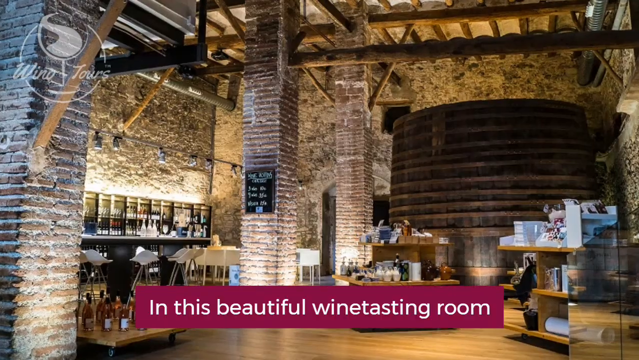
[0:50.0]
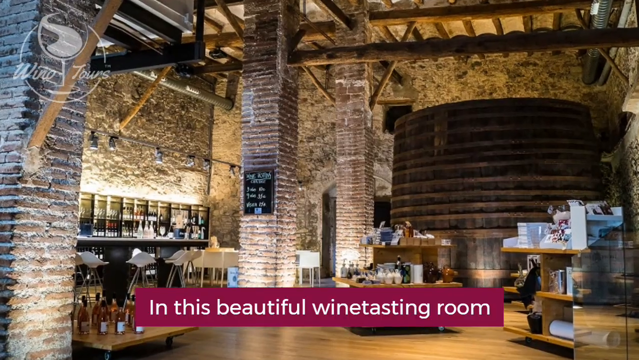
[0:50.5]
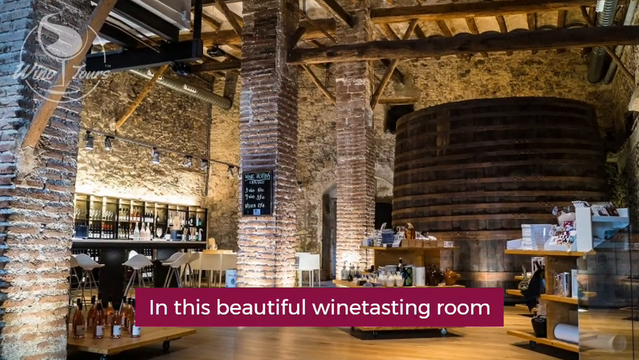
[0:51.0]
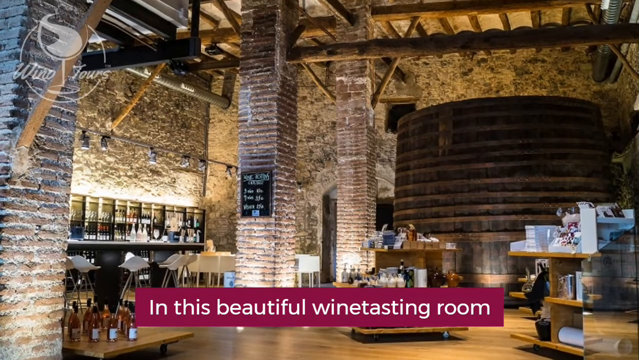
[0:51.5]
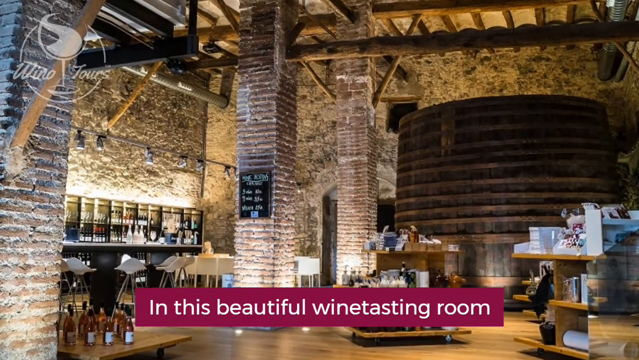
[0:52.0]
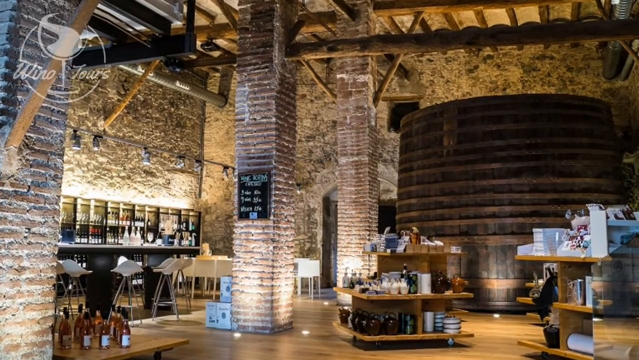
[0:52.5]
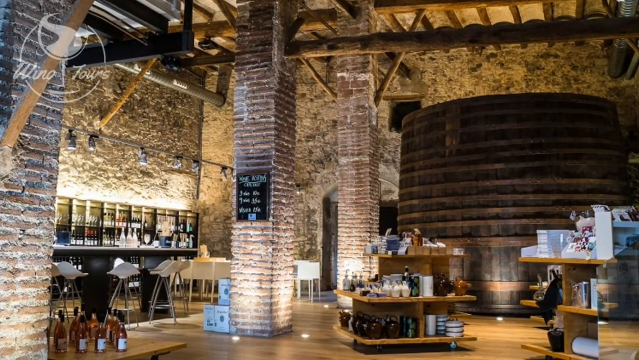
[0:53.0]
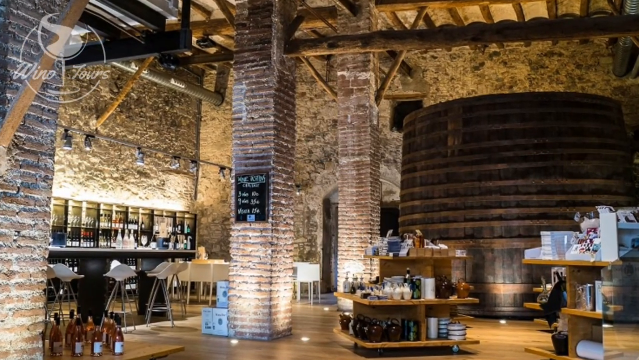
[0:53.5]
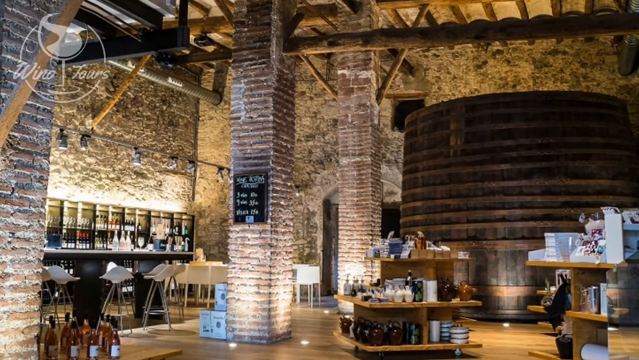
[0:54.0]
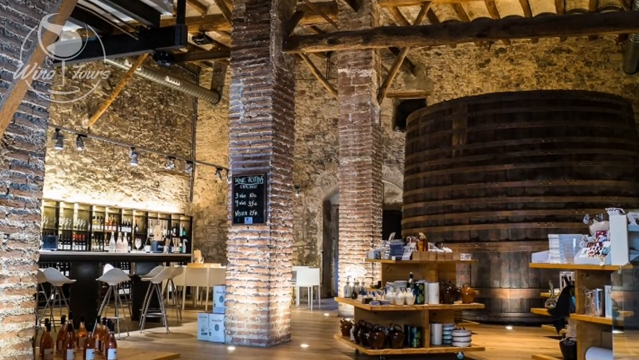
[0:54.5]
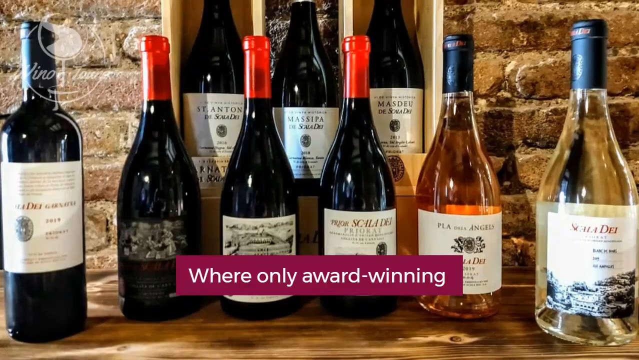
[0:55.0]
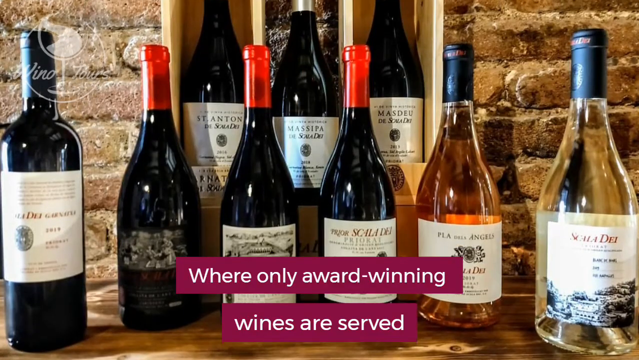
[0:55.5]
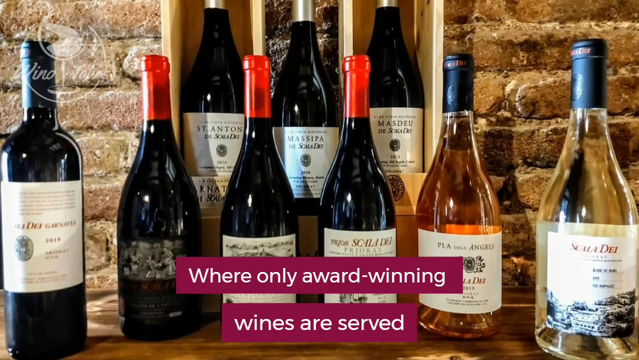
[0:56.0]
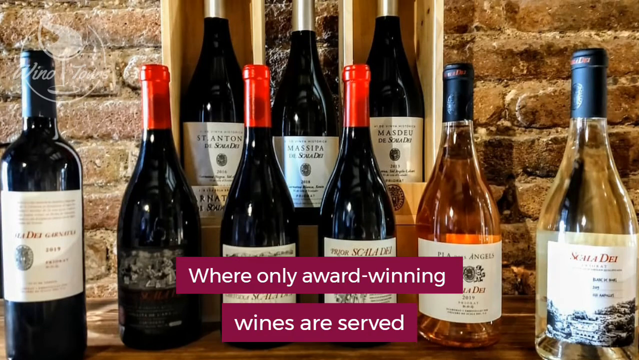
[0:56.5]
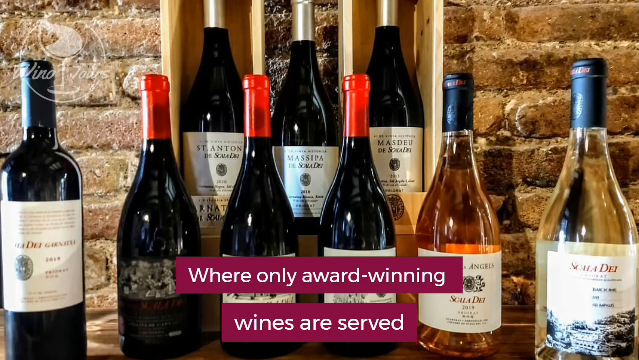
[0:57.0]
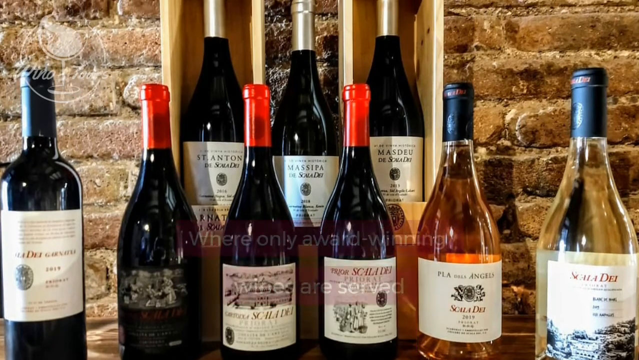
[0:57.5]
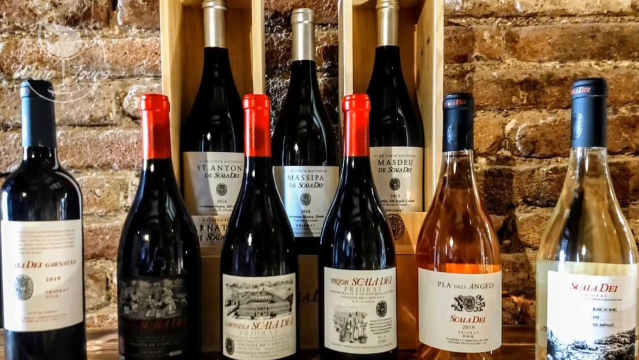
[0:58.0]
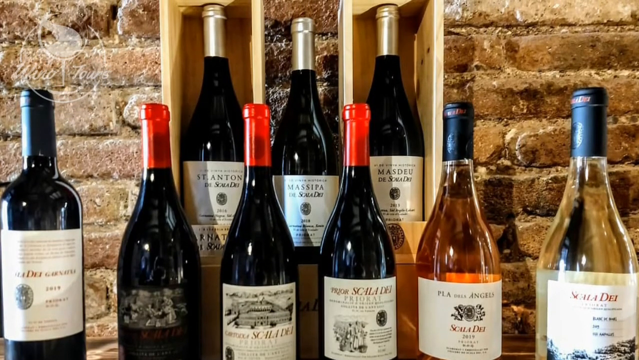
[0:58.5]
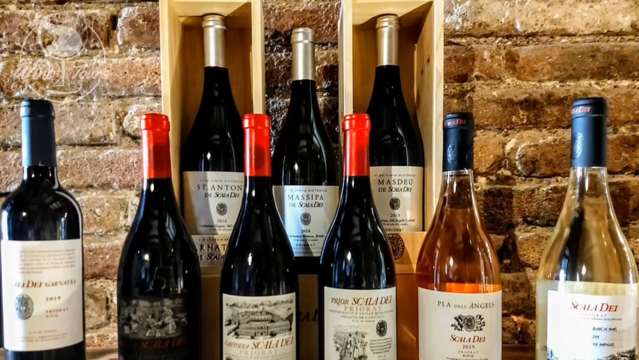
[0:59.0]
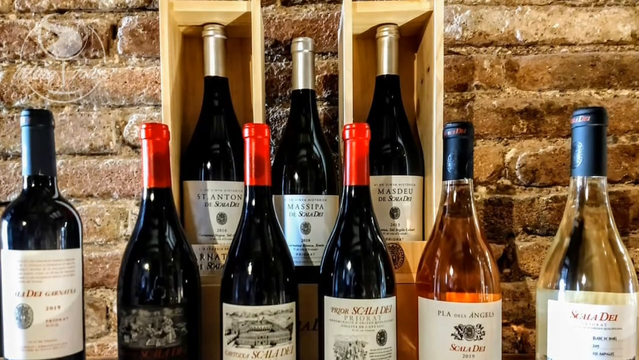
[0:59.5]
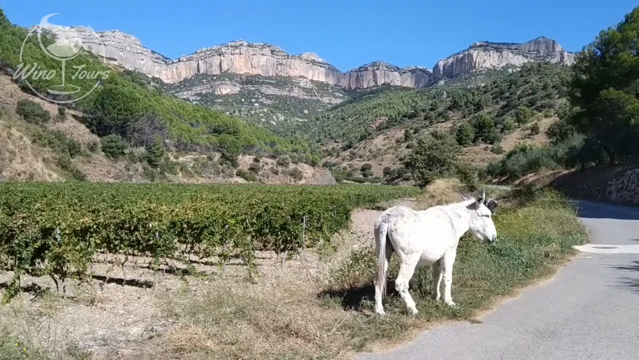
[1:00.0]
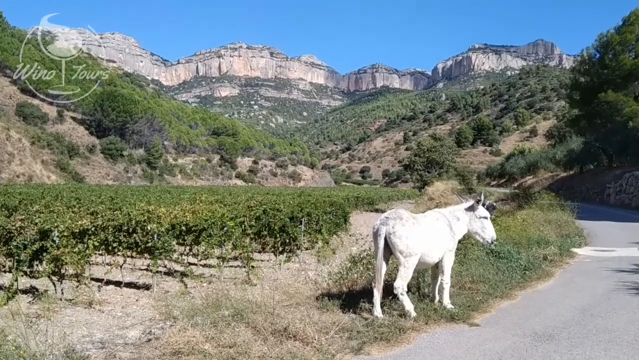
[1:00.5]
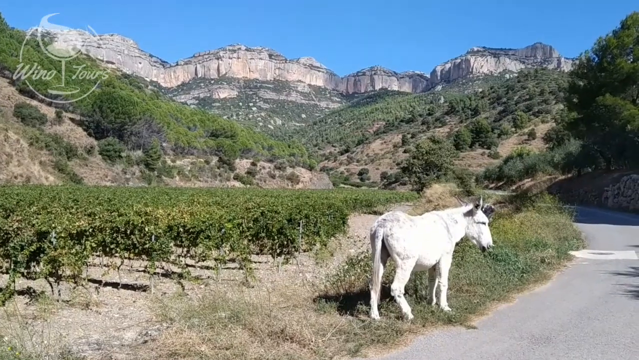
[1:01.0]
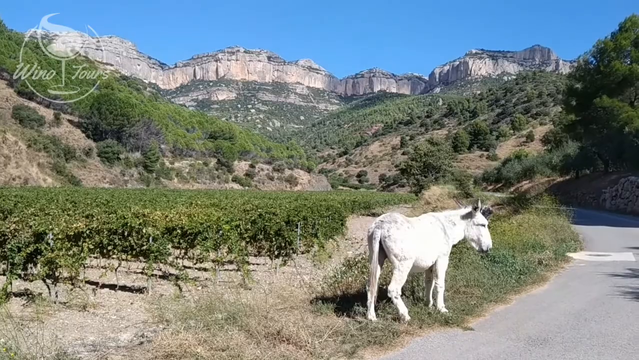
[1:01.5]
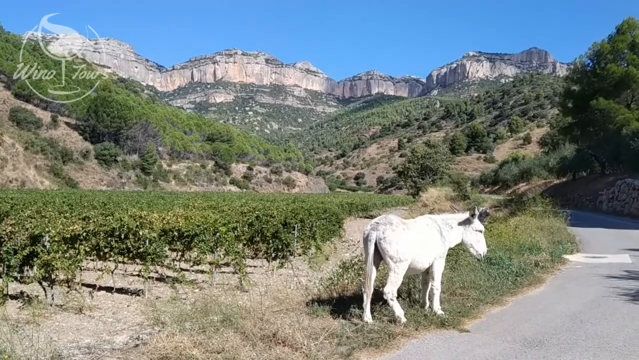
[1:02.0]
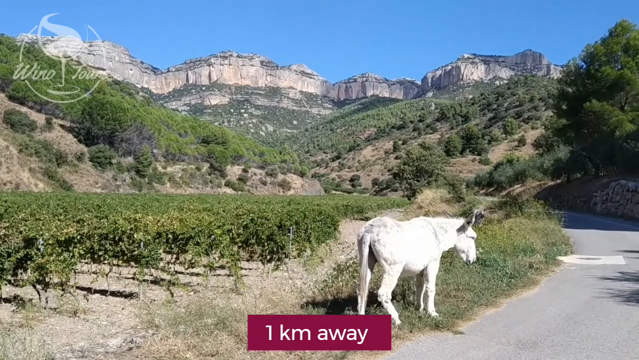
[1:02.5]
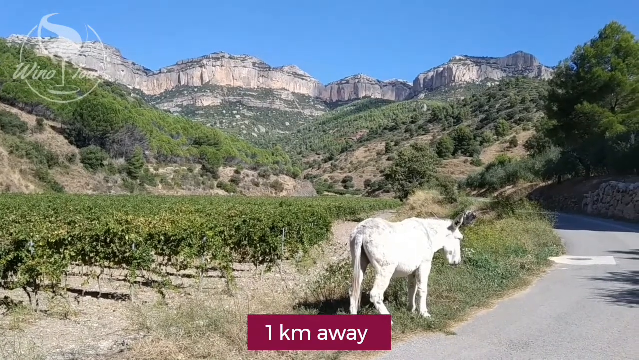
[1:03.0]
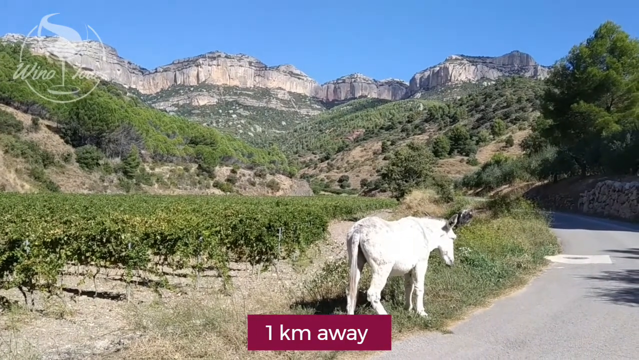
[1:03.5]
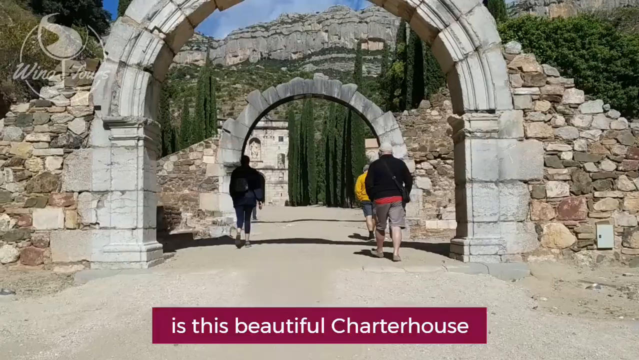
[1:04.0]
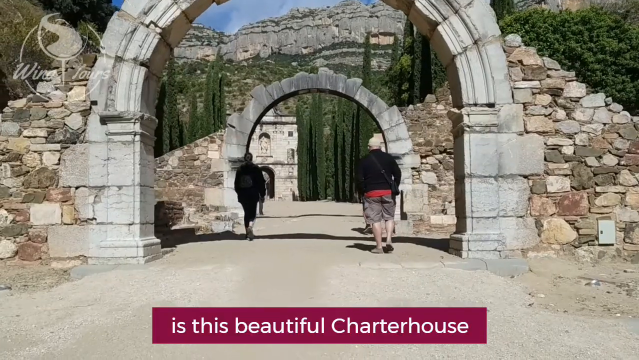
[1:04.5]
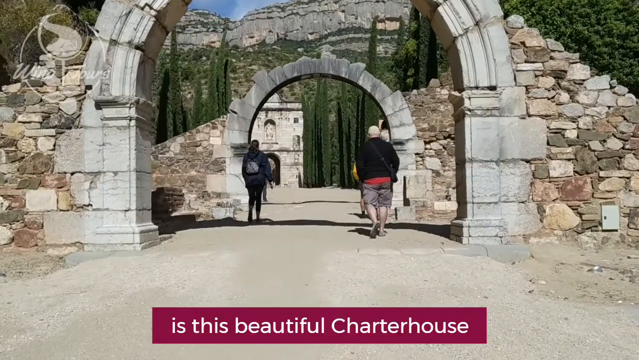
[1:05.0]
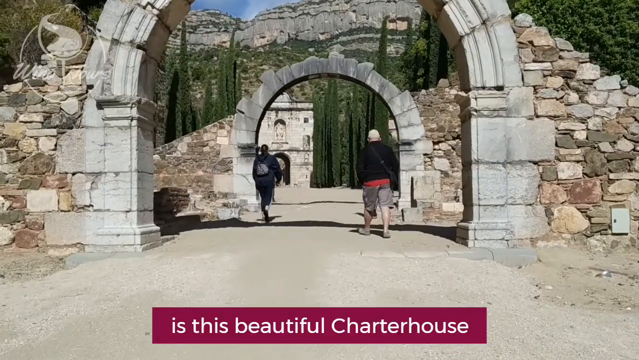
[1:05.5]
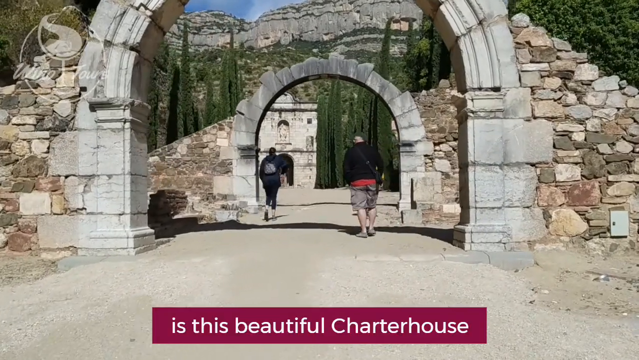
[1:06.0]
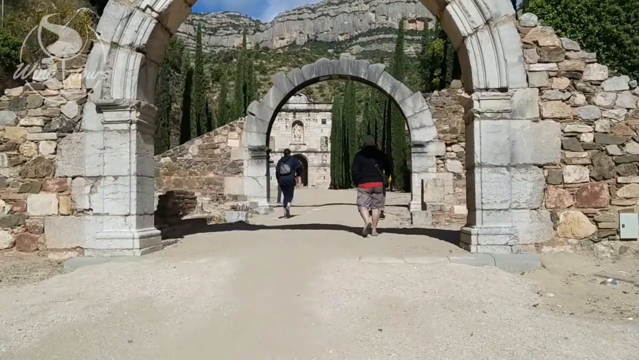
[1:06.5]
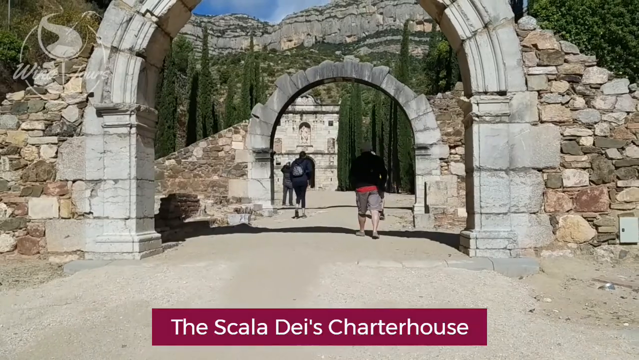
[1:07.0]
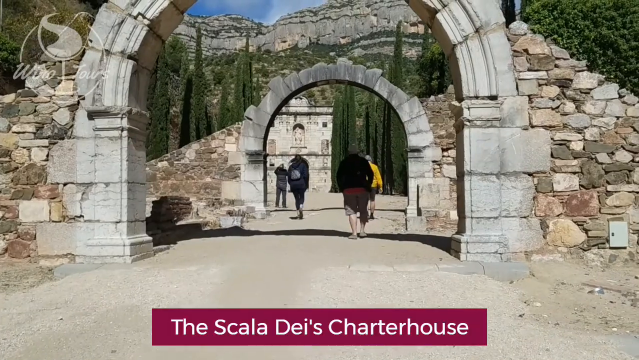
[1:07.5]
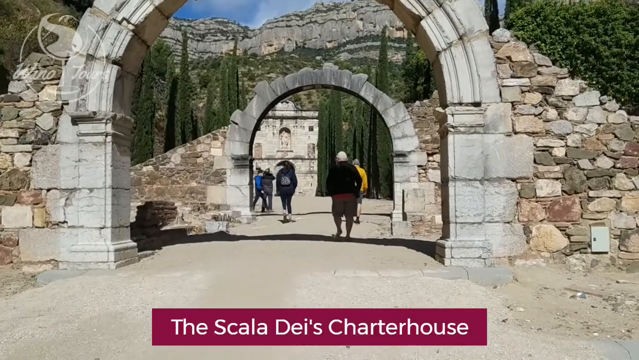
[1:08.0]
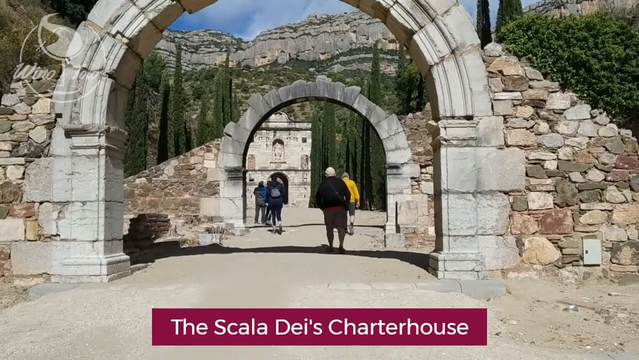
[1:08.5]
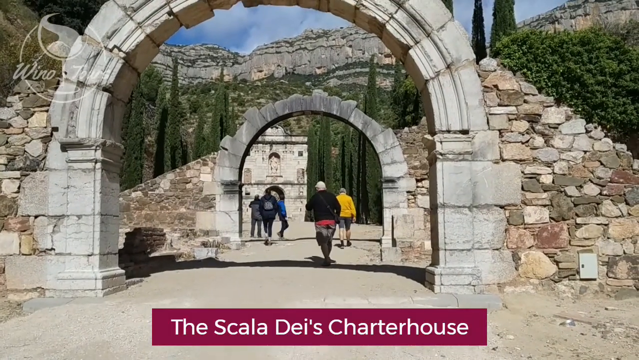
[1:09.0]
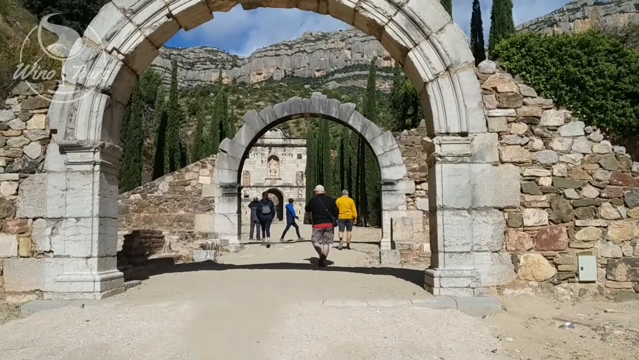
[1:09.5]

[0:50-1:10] The camera appears to zoom in on a still photo, with text at the bottom saying "In this beautiful wine tasting room". There are pillars made perhaps of brick with mortar, a large vat in the right rear of the view, and some tables on the left side. The walls look like they are made of stone, and the ceiling looks like it has wooden rafters, possibly with space beyond them or possibly just a support structure. The camera zooms in a little on this view. Next is a close-up of nine wine bottles, with the text "Where only award-winning wines are served". The bottles have different types of labels: one says "Scala Dei", another "St. Anthony", another "Masdeu De Scala Dei", and one "Massipa"; some of the text is hard to read because of the low resolution. The bottles are posed together on a table up against an antique-looking, worn brick wall, with three in the back raised a little higher so they are visible between the six in the front. The ones against the wall are inside wooden boxes with the lids off, as if packed and ready to be shipped. The camera pans up over the bottles. The view then switches to an outdoor scene: in the far background are cliffs, with hills leading up to straight-edged cliffs. In the foreground is what looks like a vineyard, with a road curving to the right, and almost in the middle at the front is what appears to be a white donkey or mule chewing on something. Just before the donkey disappears off the screen, text says "One kilometer away" and then "is this beautiful charter house". The camera pans a view of ancient bricks on either side of a stone archway over a road probably wide enough for at least one car, possibly two small ones. People walk away from the camera through the archway toward a second archway a little further ahead. In the far background is a white stone structure, apparently the charter house, and beyond it are the cliffs, maybe a little closer than before.